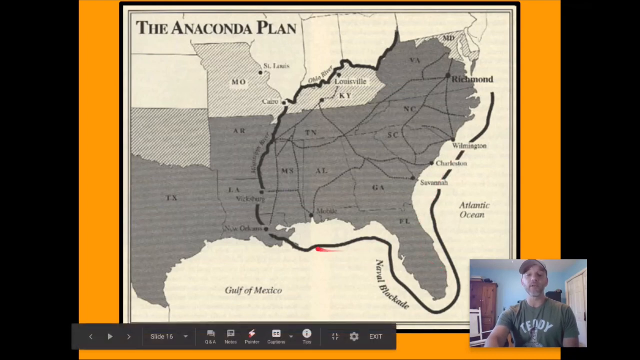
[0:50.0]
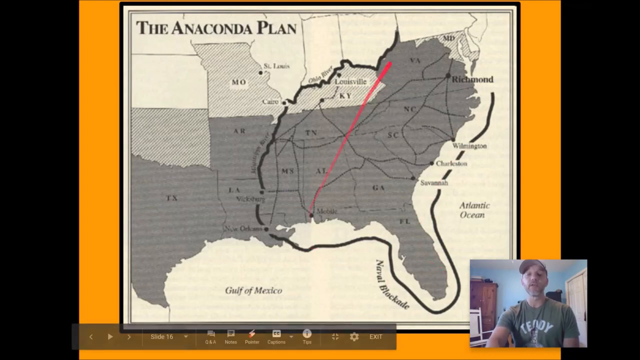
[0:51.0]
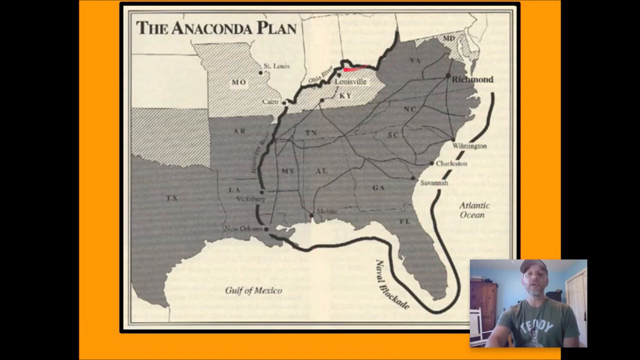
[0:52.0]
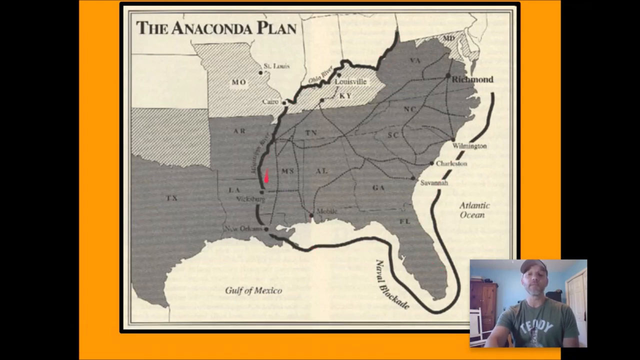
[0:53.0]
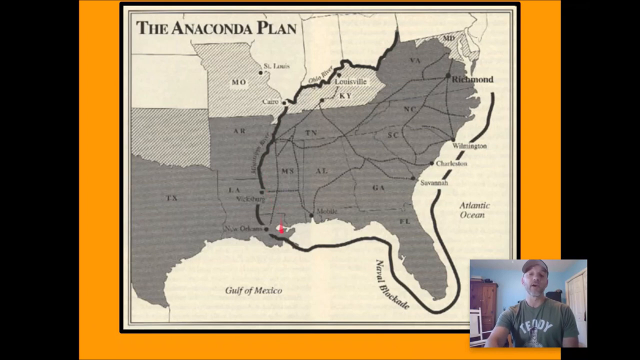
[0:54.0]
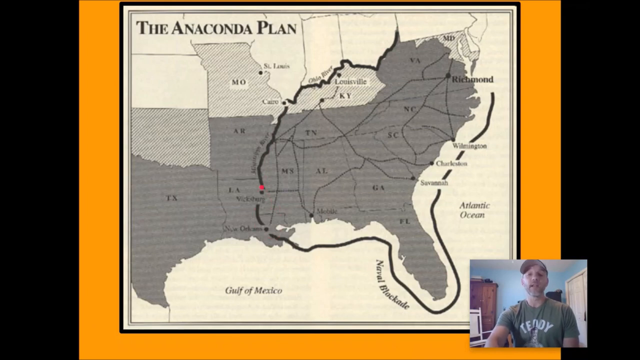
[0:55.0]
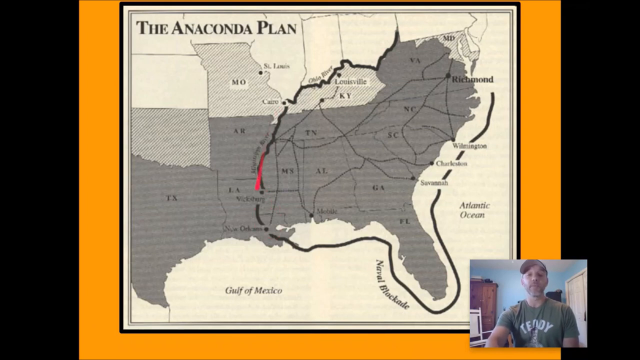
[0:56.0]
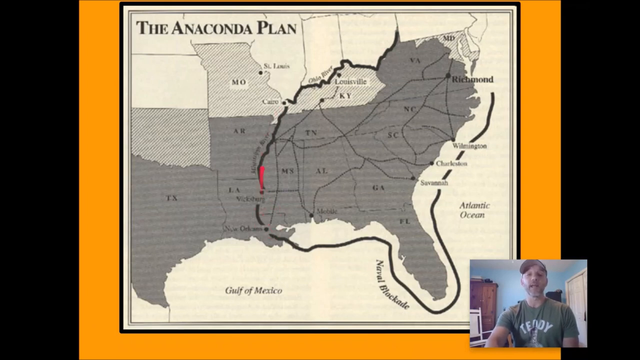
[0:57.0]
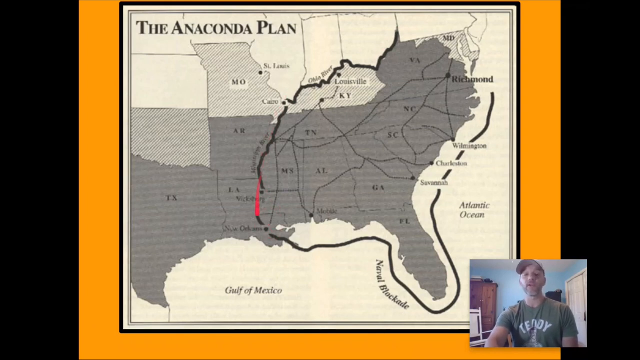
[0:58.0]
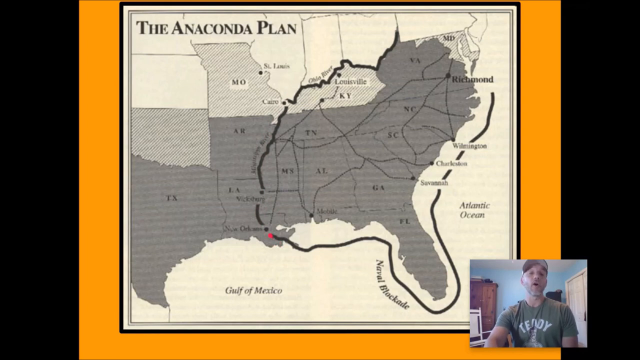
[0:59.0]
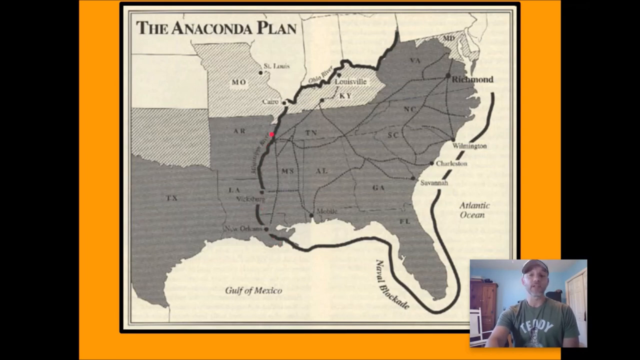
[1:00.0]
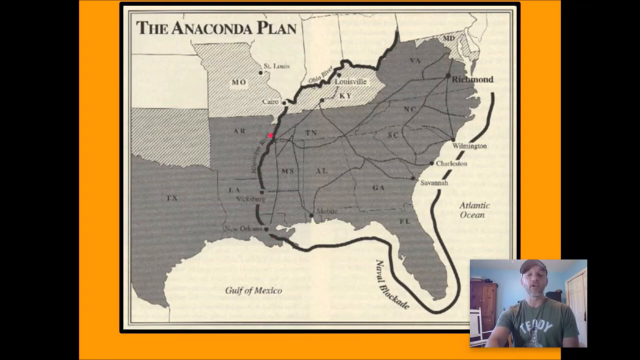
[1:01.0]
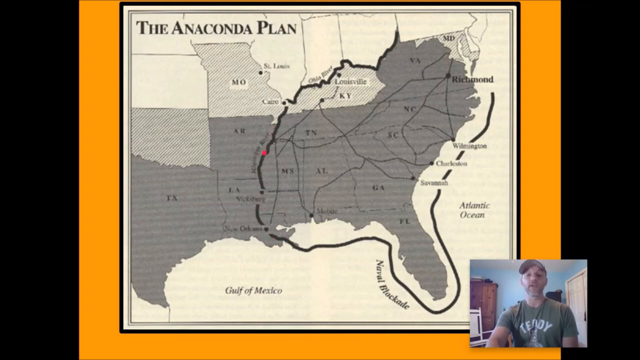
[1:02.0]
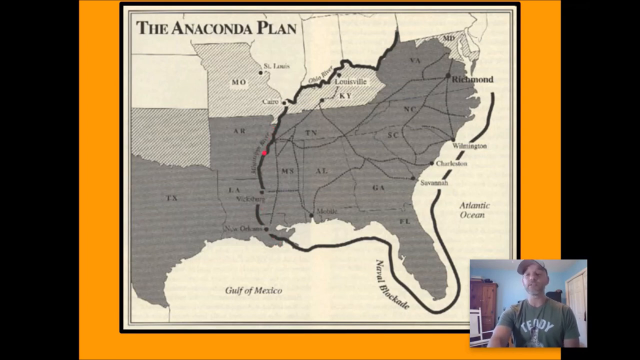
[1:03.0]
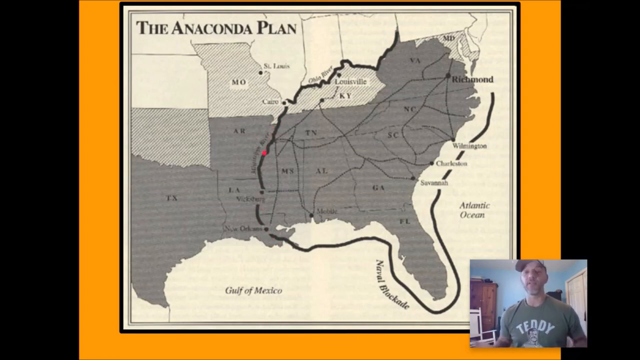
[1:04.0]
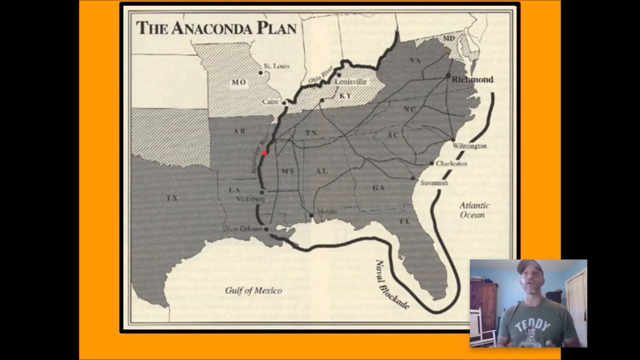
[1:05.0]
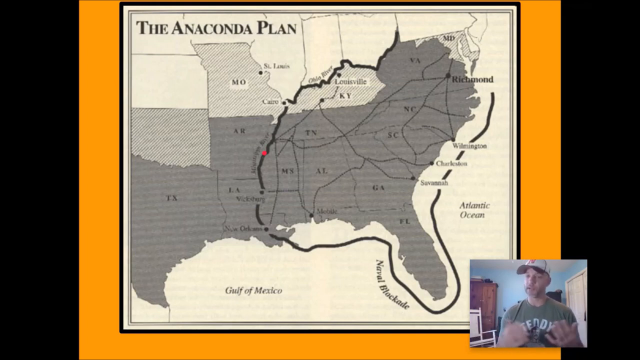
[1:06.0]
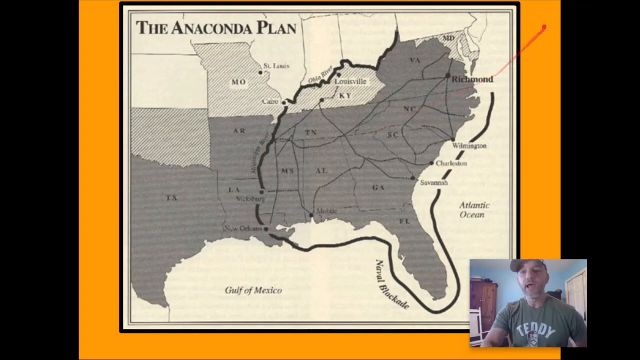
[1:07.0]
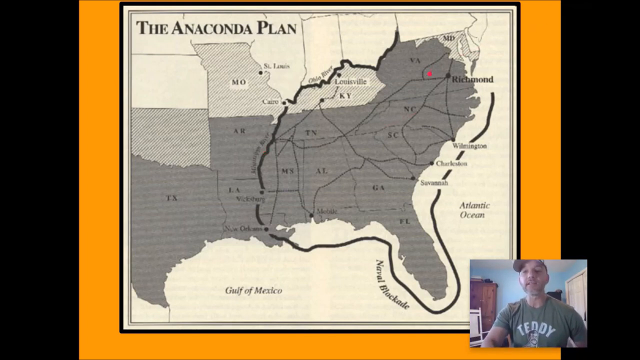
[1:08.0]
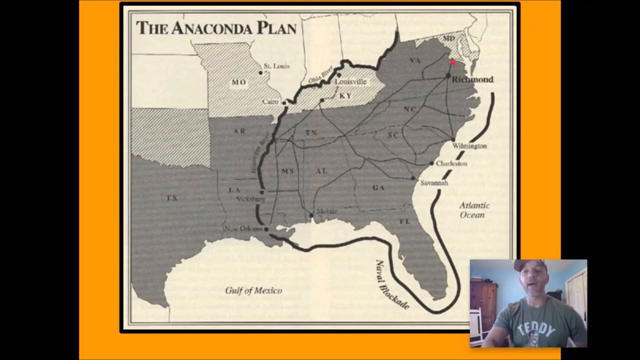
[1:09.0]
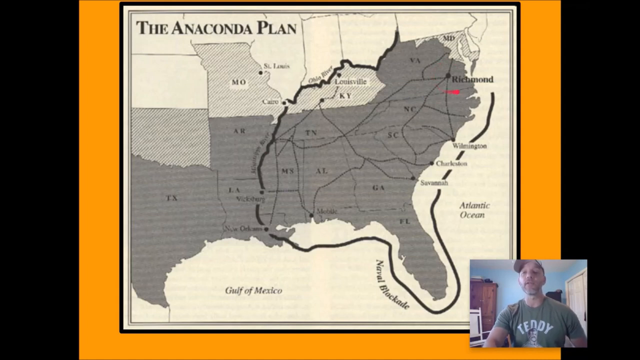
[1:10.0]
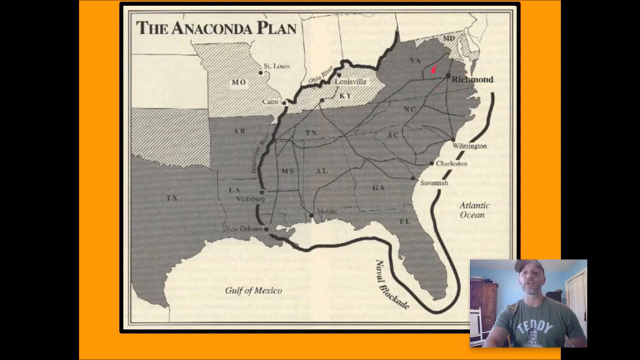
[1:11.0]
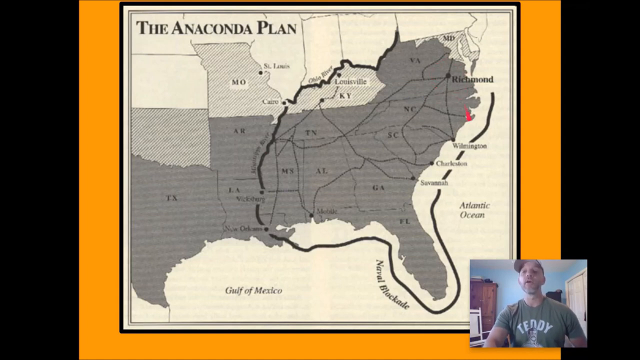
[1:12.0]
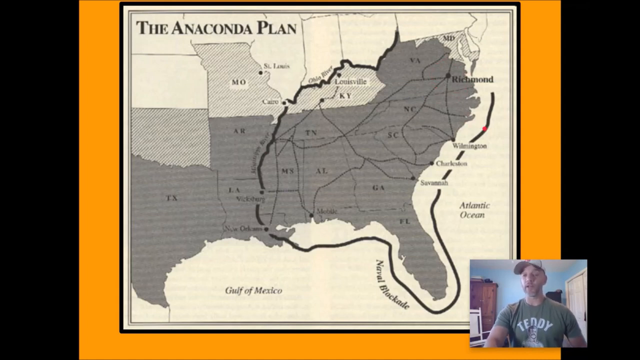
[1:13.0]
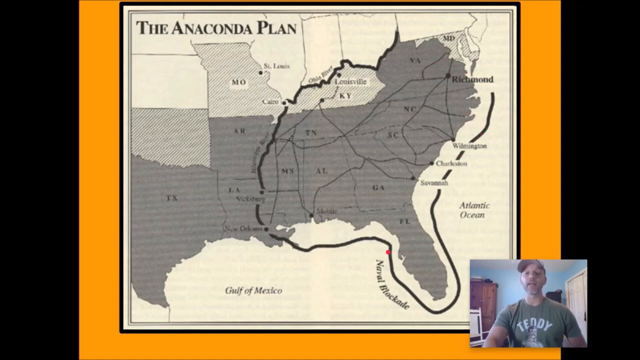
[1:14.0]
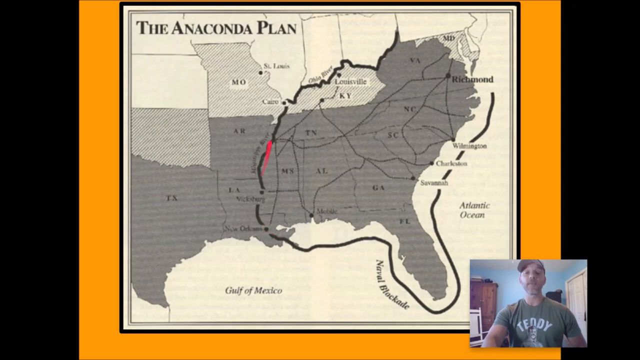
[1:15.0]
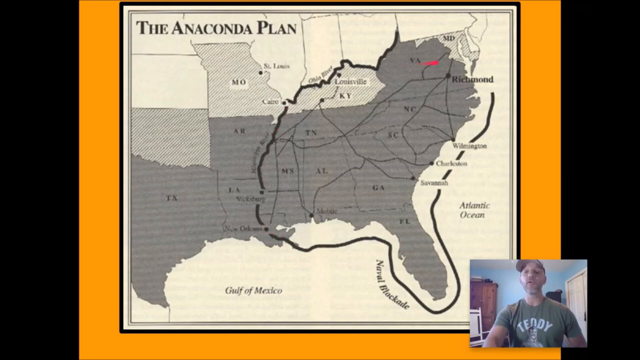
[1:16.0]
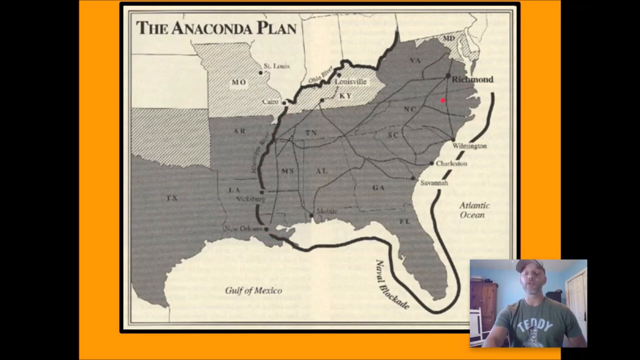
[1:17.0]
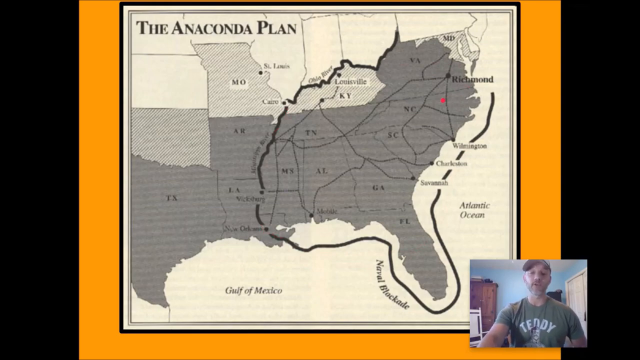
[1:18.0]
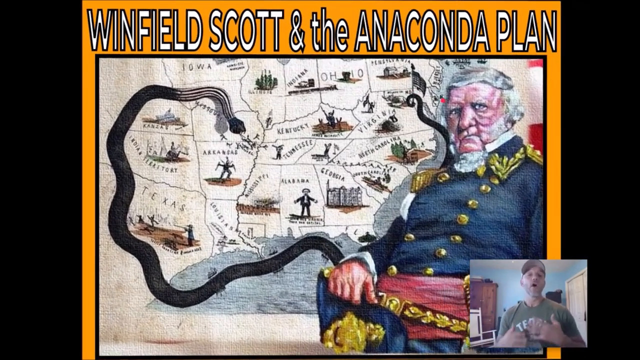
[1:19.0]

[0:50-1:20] On the map, the red circle keeps moving around the black line that outlines a couple of the American states. The man in the lower right-hand corner continues to speak into the camera and make hand gestures. The mouse keeps circling around some of the states outlined in black. The picture from the beginning, labeled "Winfield Scott and the Anaconda Plan", is then shown again: a map outlined in black by a very large black snake, with an elderly man on the right side dressed in soldier attire associated with the Revolutionary War of 1776. The entire video is in a rectangular shape.